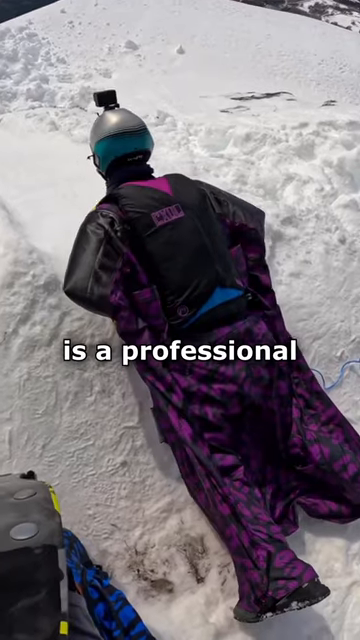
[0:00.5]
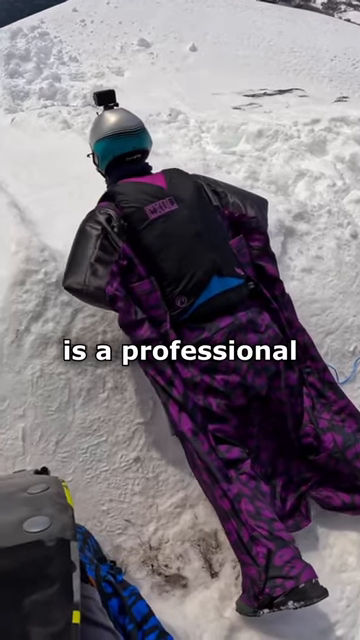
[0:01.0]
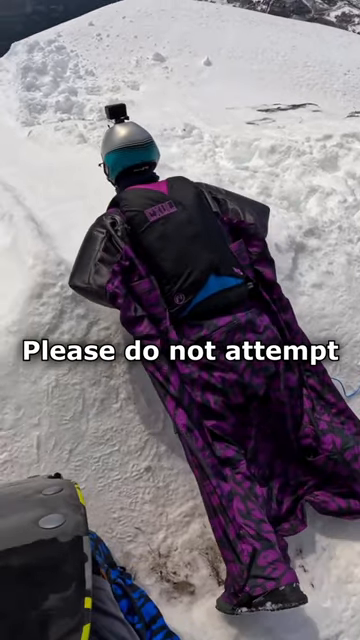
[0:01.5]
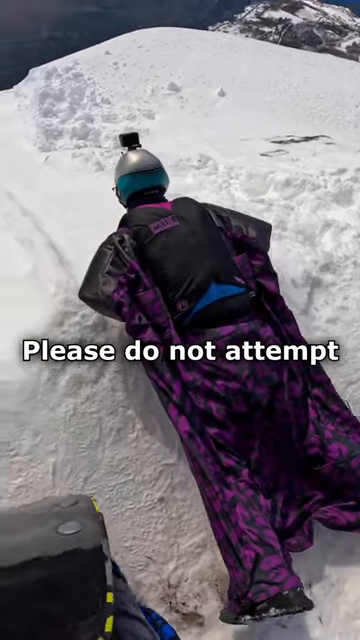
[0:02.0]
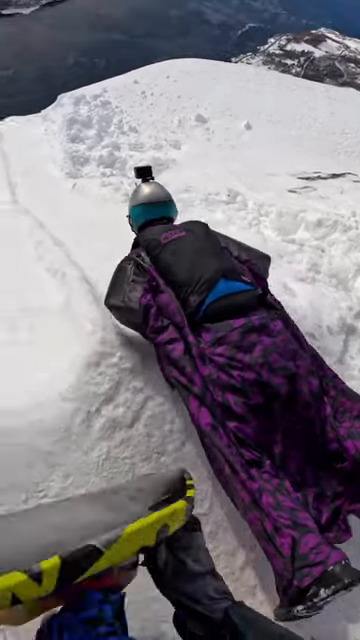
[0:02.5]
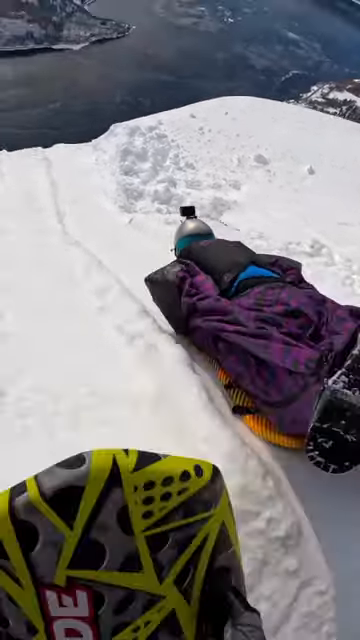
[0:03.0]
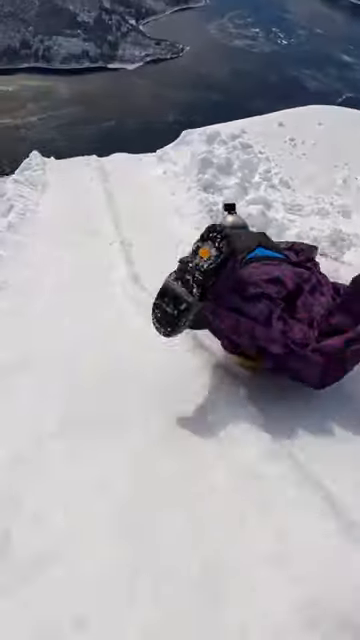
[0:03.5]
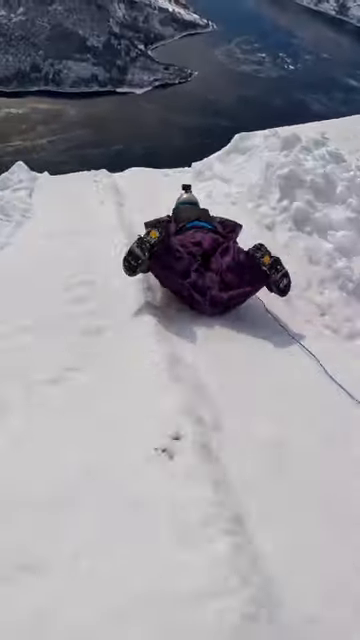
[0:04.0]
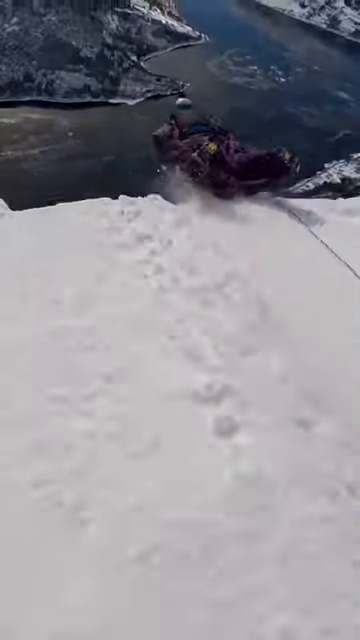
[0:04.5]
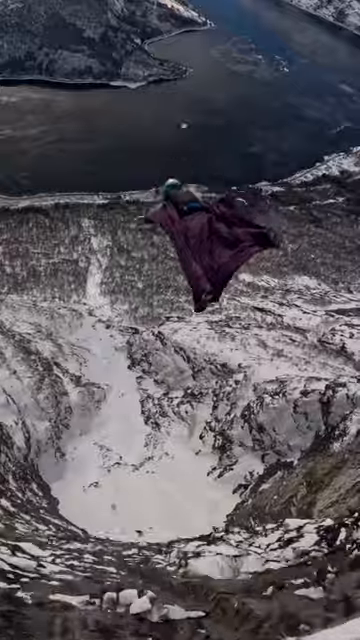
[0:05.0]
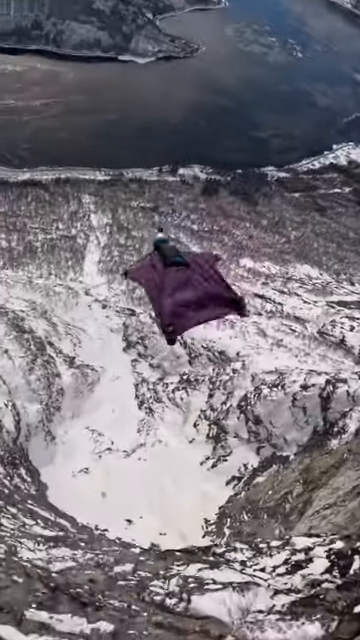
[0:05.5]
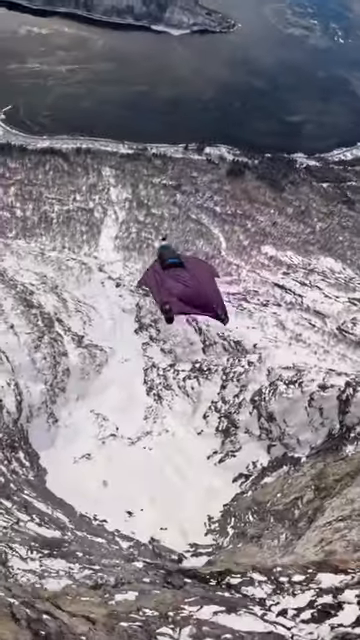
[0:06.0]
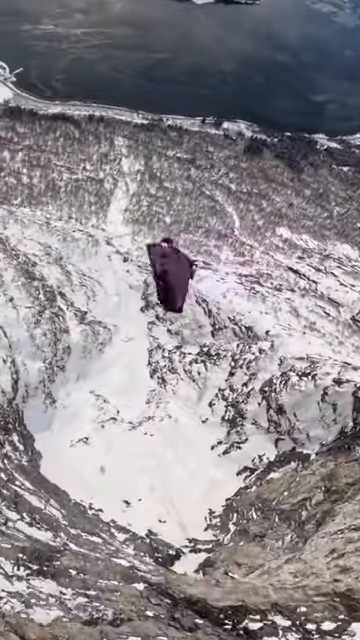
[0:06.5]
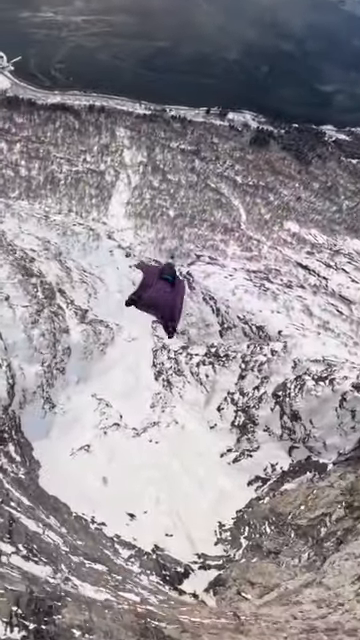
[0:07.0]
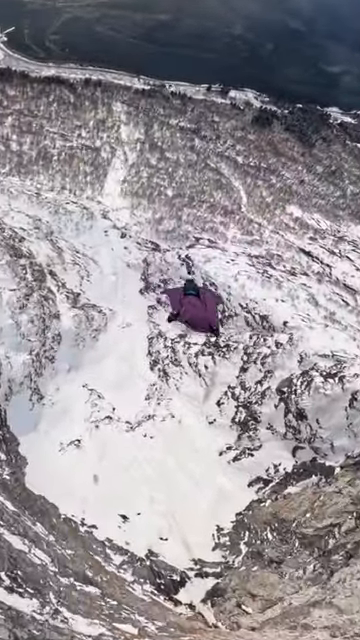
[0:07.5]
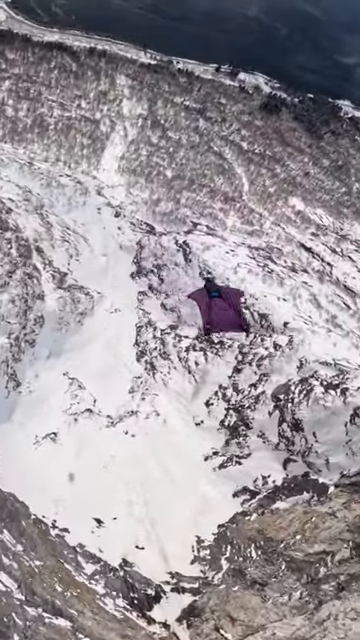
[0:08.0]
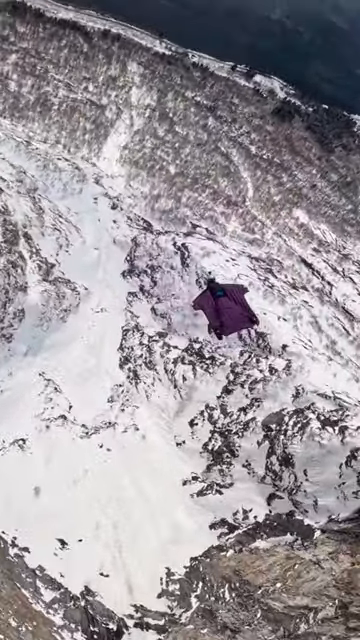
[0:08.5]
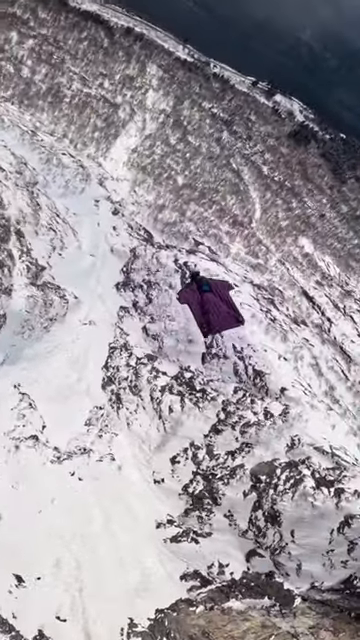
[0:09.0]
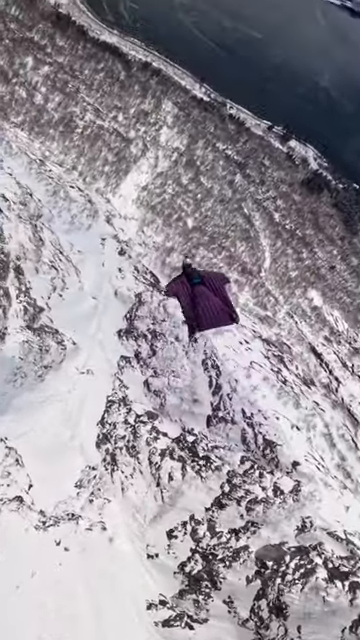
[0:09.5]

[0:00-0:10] At the top of what is basically a cliff of solid packed snow, a man lies on his stomach with his arms down at his sides, and another person stands to the left of him holding a flag of sorts. Text across the front of the screen reads "this is a professional, please do not attempt." The footage occupies a small section in the center of the frame, with two sections of about the same size on either side of it, and the center looks like cell phone video. The man slides off the top of the cliff and immediately goes off the edge. He appears to be on an orange sled, but it disappears, and it is not seen falling back behind him. He is wearing what looks like a purple wingsuit and a silver hat. As soon as he lifts off, he puts his arms and legs out and flips over, rolling over horizontally in the air. He then heads down toward a rocky, craggy mountain.